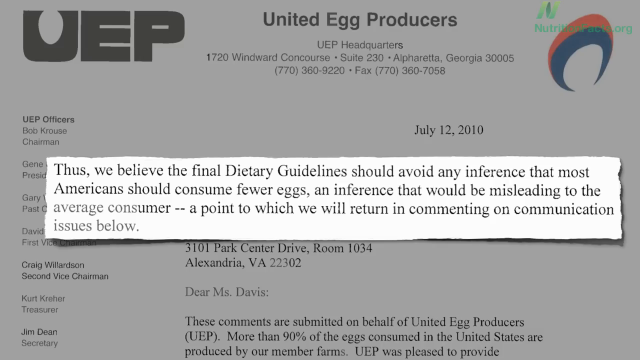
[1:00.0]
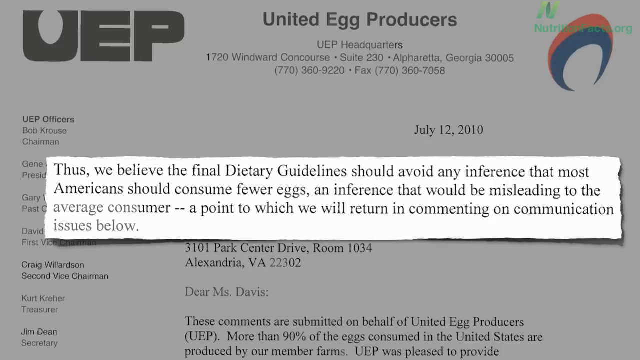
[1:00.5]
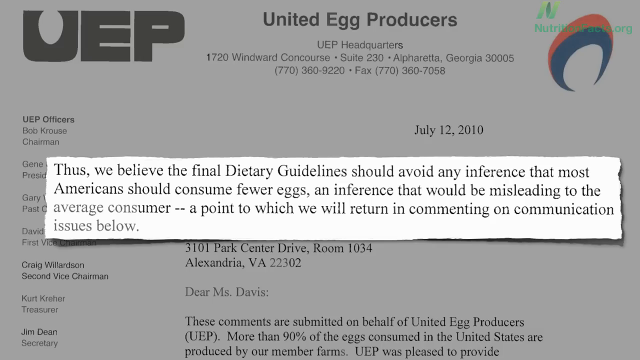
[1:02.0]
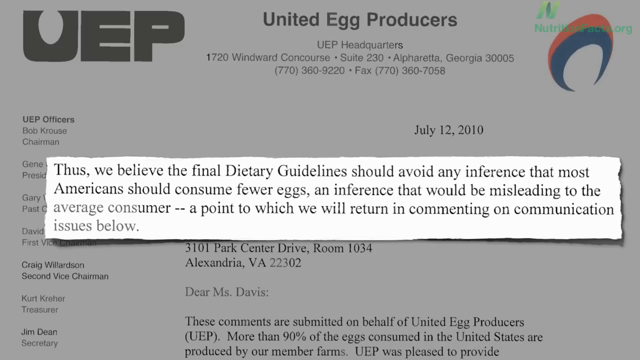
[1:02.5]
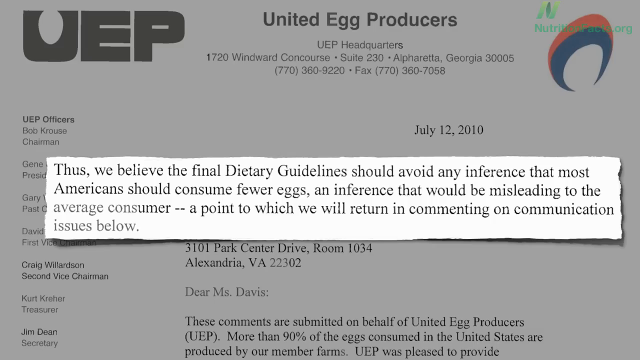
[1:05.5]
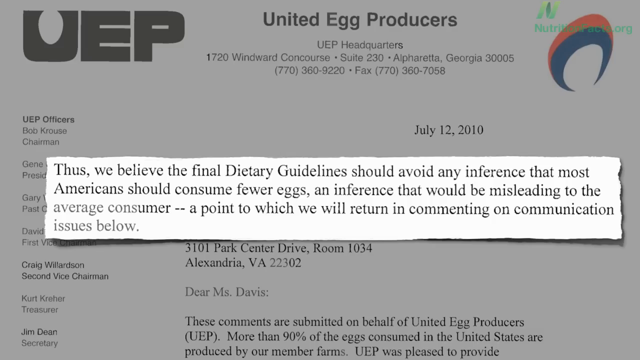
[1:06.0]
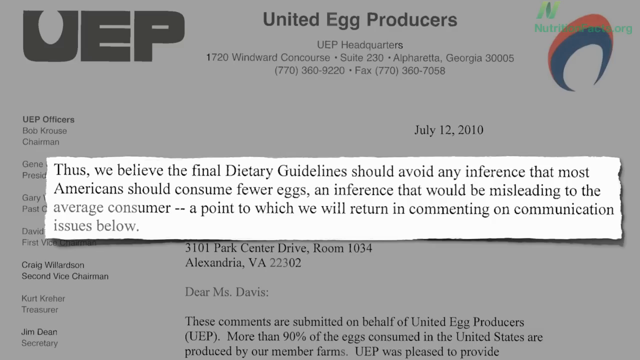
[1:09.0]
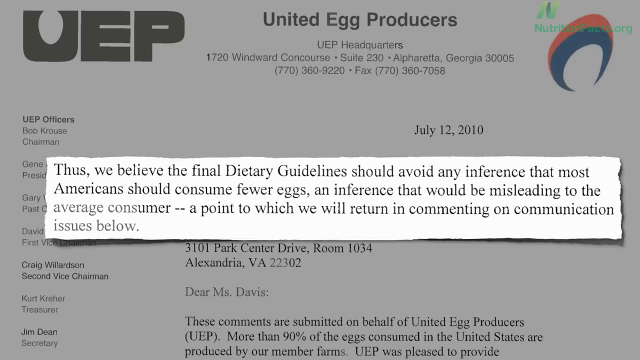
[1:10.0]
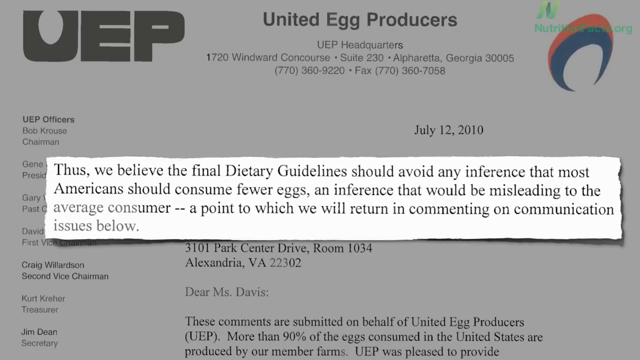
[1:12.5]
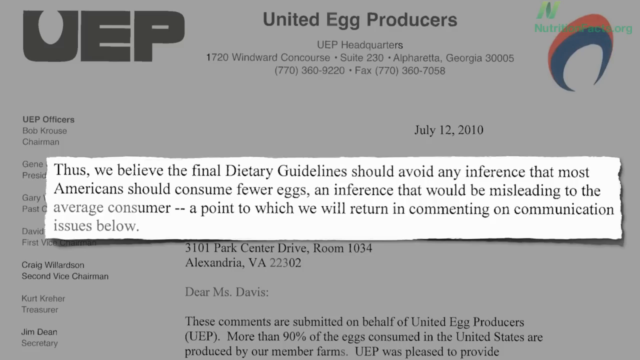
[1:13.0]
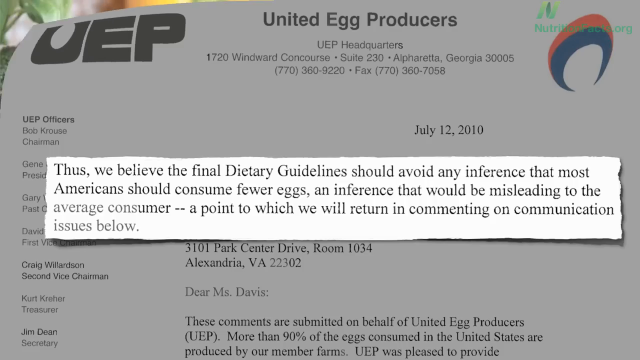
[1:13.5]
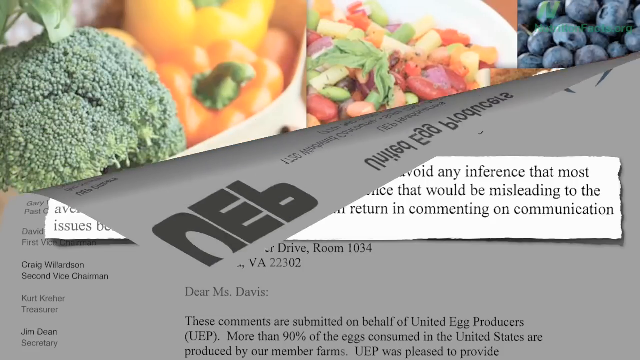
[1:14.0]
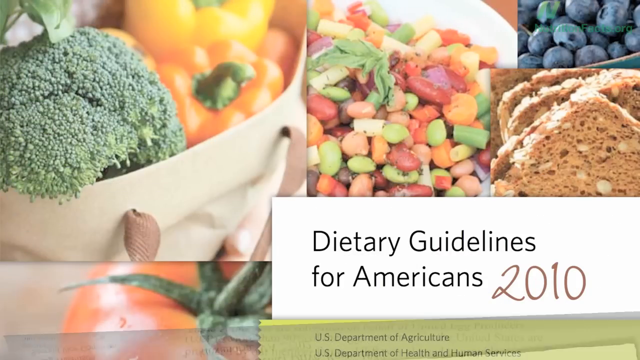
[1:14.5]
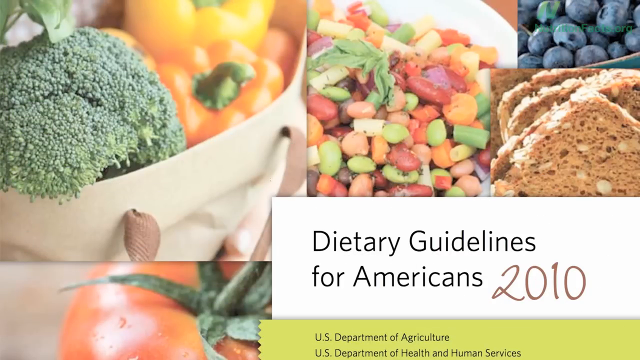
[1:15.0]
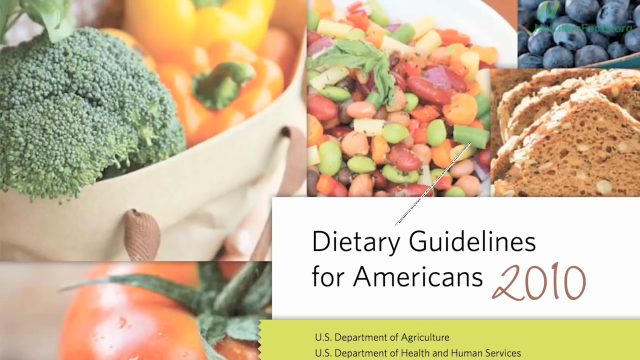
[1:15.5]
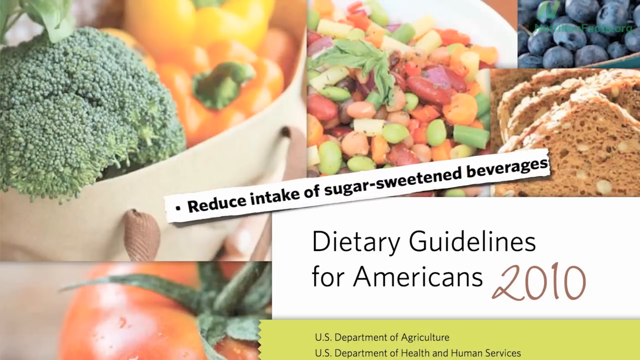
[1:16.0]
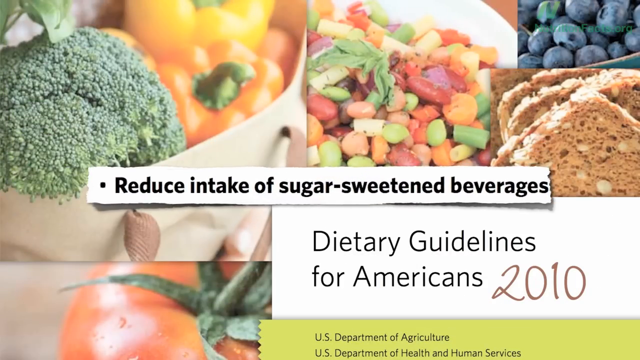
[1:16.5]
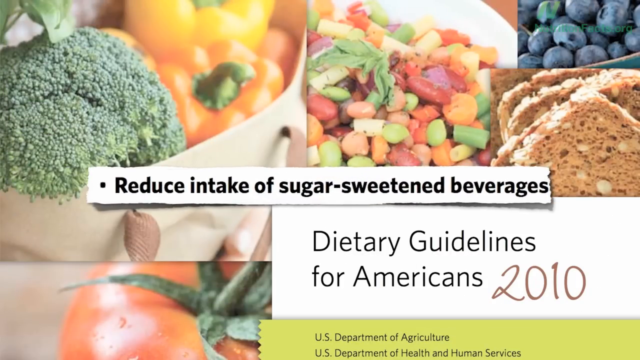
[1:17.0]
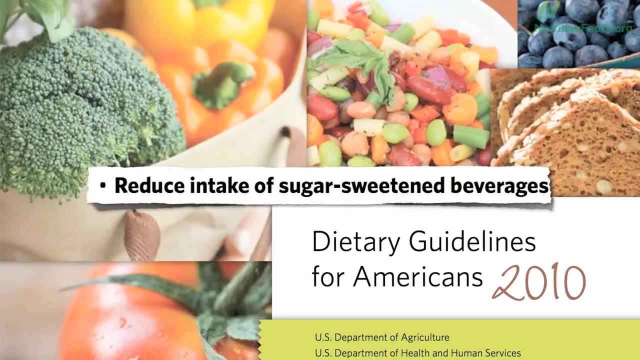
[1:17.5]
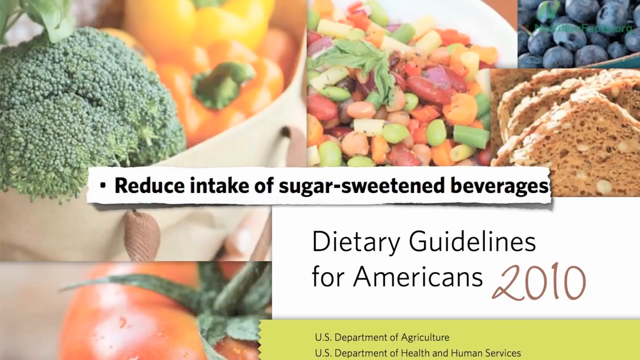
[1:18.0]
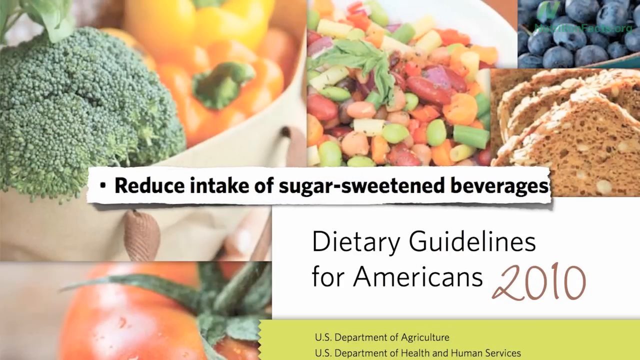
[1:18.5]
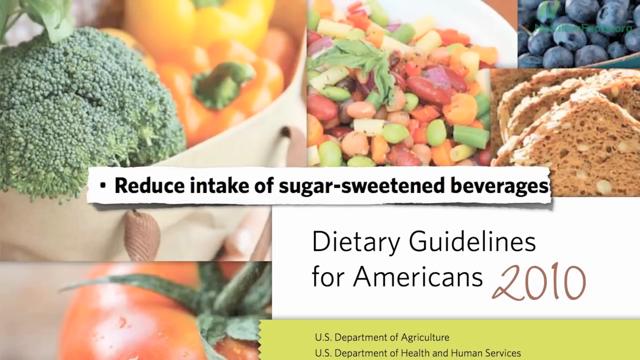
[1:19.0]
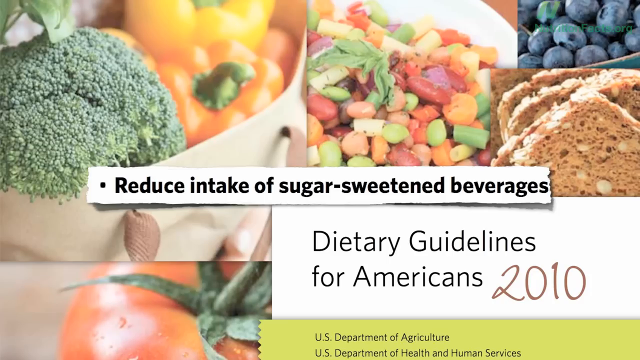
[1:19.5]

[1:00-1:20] The ripped piece of paper with the text about the dietary guidelines avoiding any interference that most Americans should consume fewer eggs stays on the screen. The slide then flips like a book page down from the top left to the bottom of the screen, and the "Dietary Guidelines for Americans 2010" image appears again with its collaged pictures: a bowl of vegetables like broccoli and orange and yellow bell pepper, a bean salad with different veggies like green beans, carrots, peas and beans, some blueberries, some whole wheat bread with nuts and oats in it, and a shot of a tomato. A small, thin, ripped piece of paper then zooms onto the screen reading "reduce intake of sugar sweetened beverages".